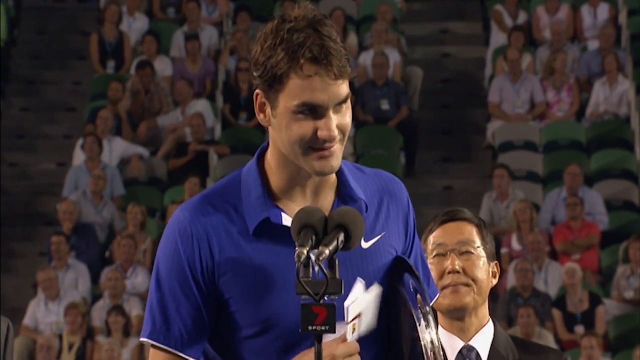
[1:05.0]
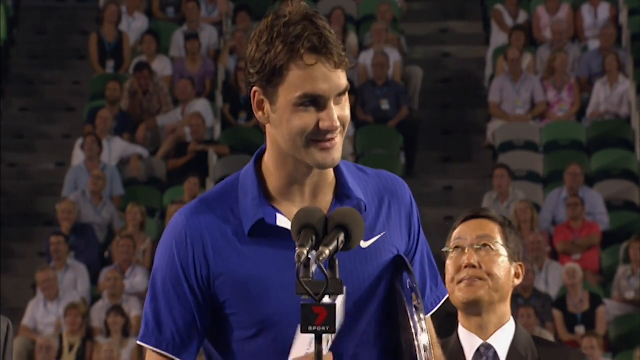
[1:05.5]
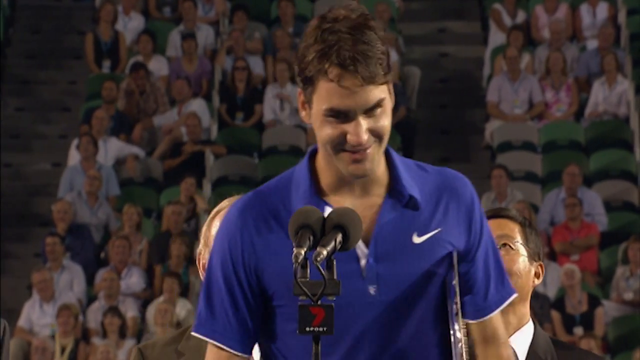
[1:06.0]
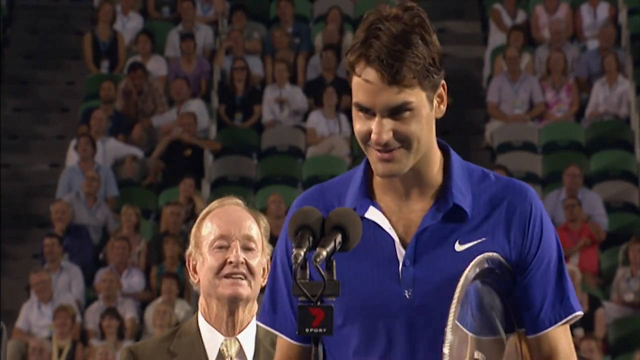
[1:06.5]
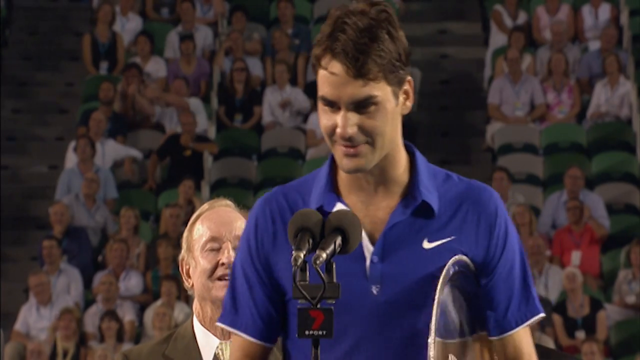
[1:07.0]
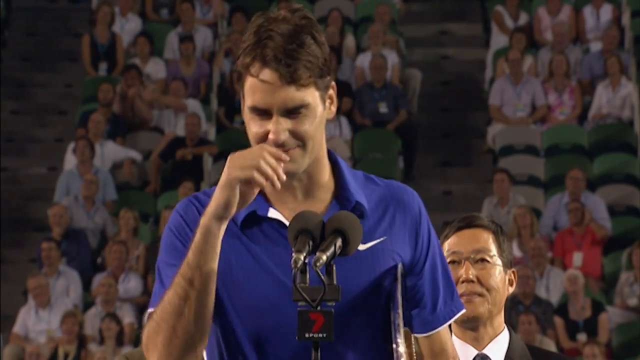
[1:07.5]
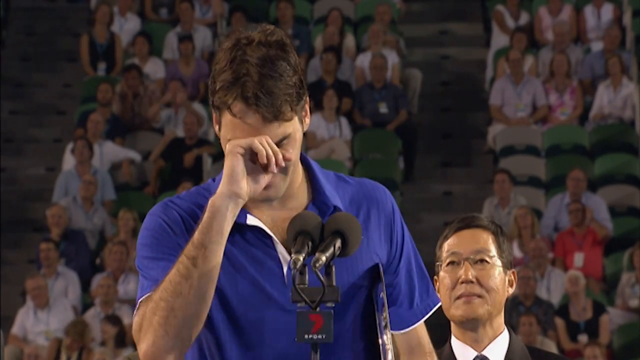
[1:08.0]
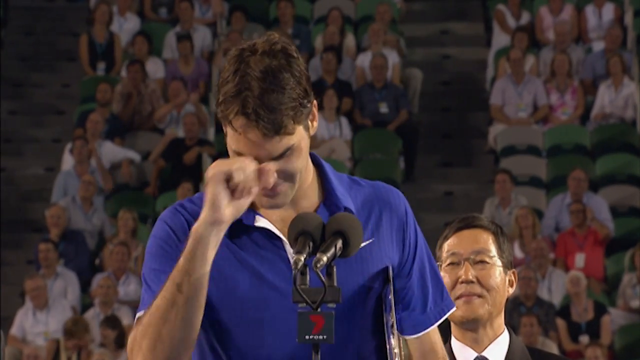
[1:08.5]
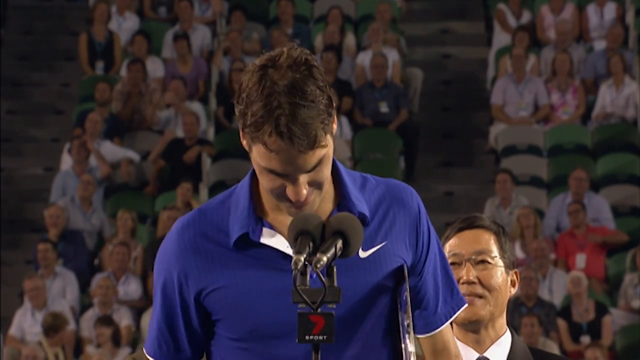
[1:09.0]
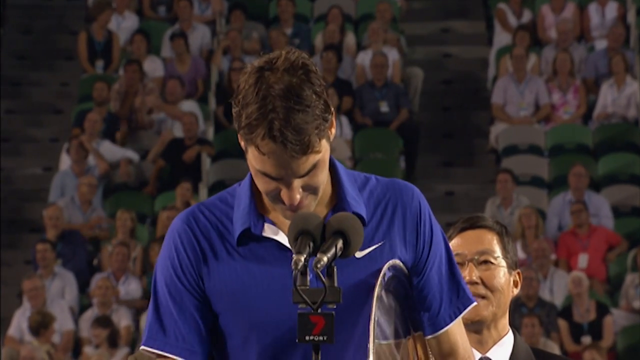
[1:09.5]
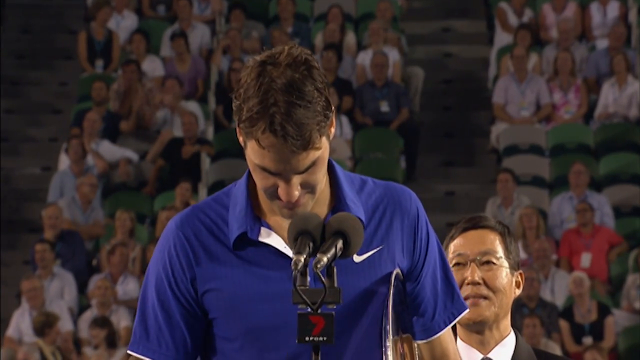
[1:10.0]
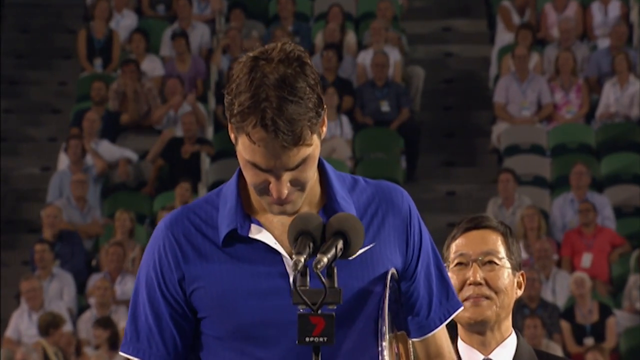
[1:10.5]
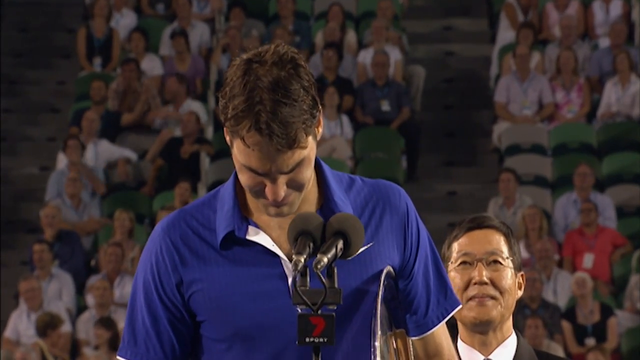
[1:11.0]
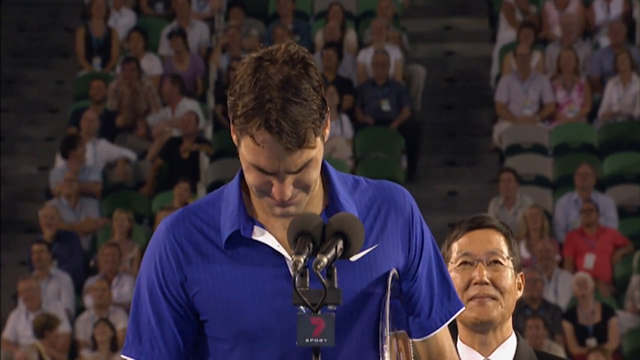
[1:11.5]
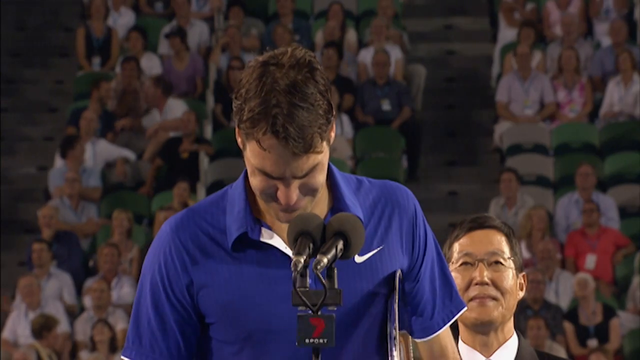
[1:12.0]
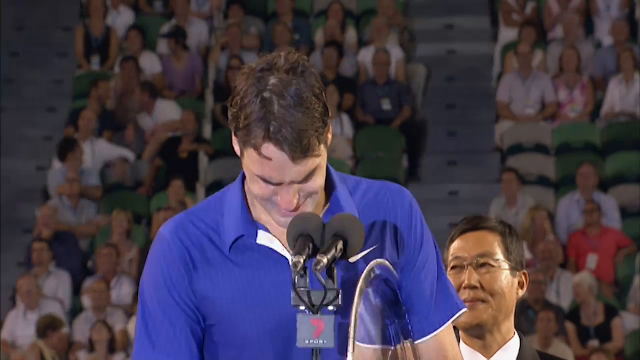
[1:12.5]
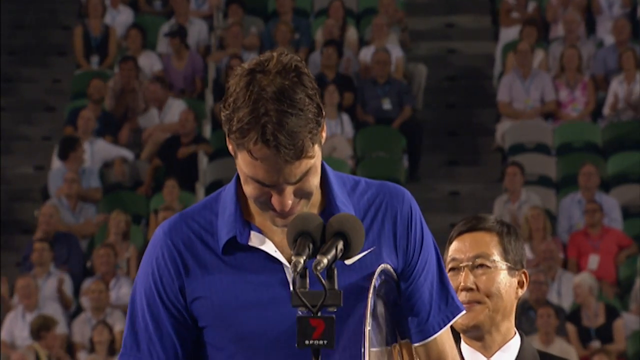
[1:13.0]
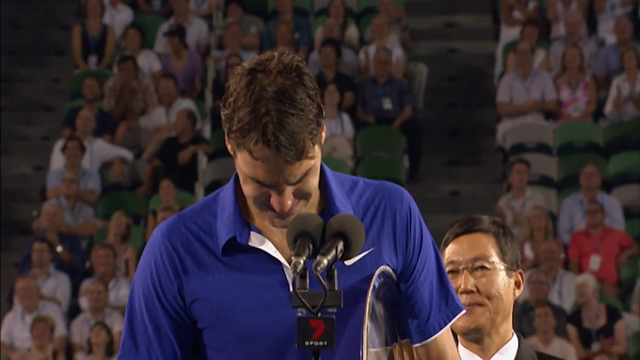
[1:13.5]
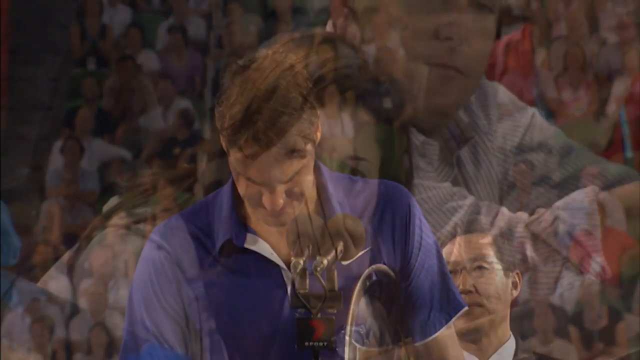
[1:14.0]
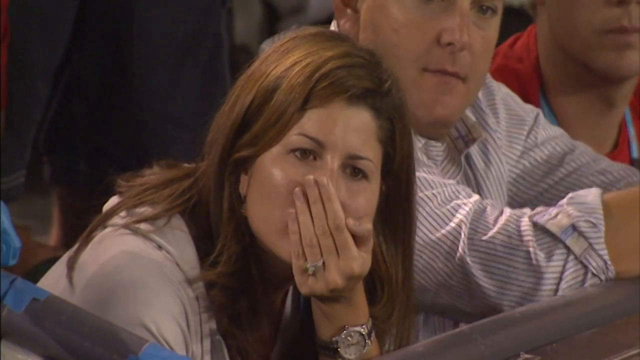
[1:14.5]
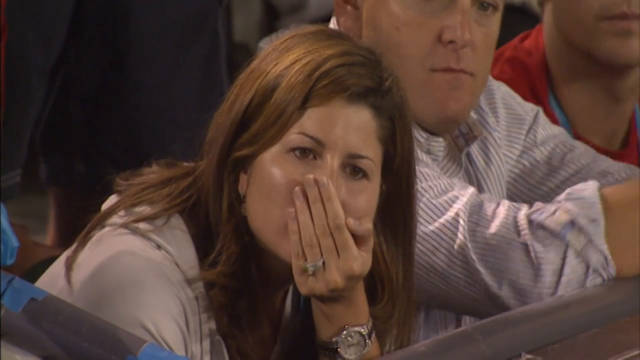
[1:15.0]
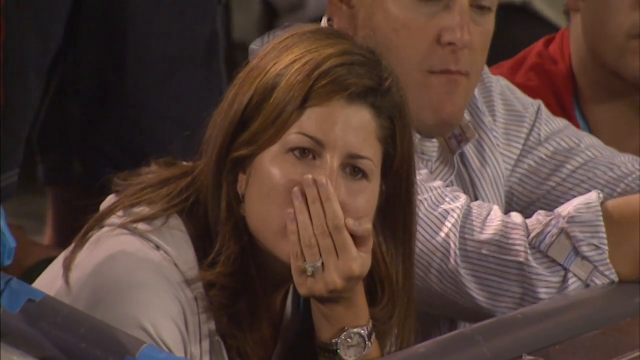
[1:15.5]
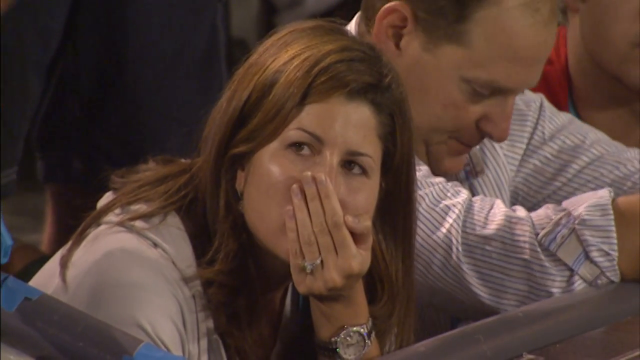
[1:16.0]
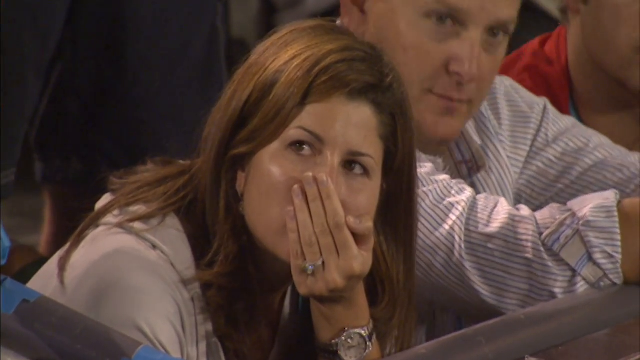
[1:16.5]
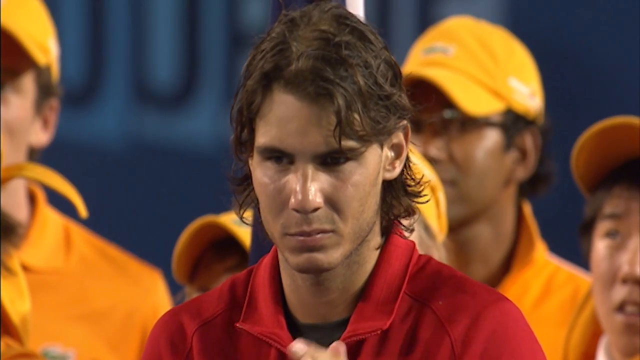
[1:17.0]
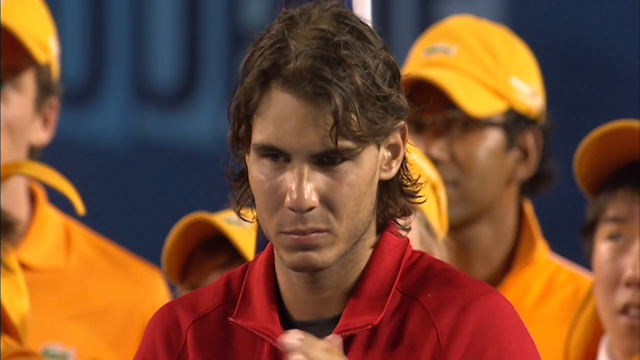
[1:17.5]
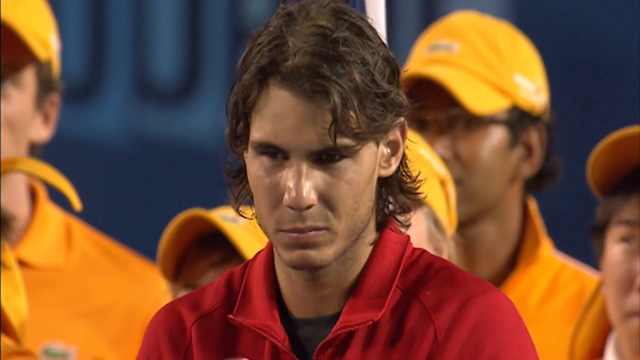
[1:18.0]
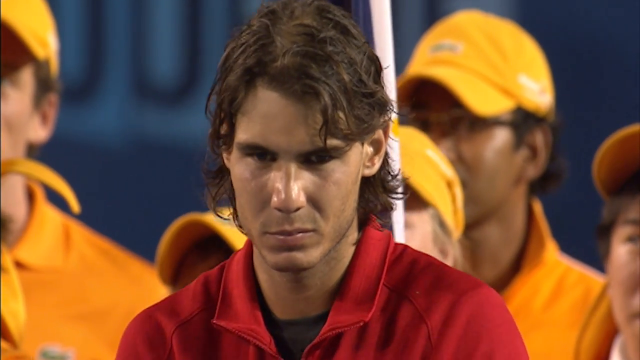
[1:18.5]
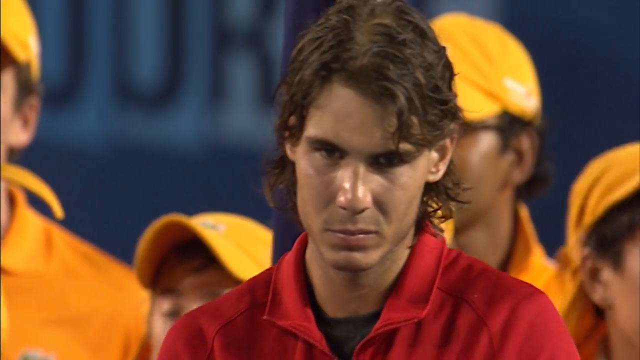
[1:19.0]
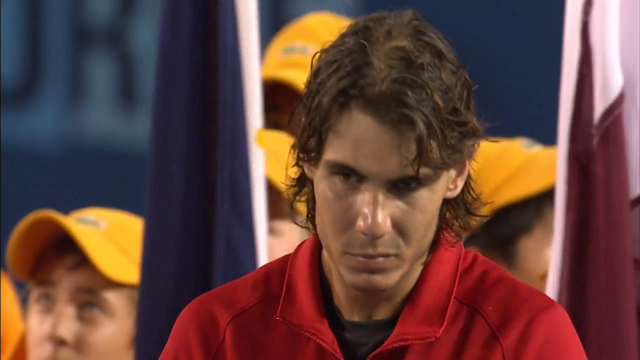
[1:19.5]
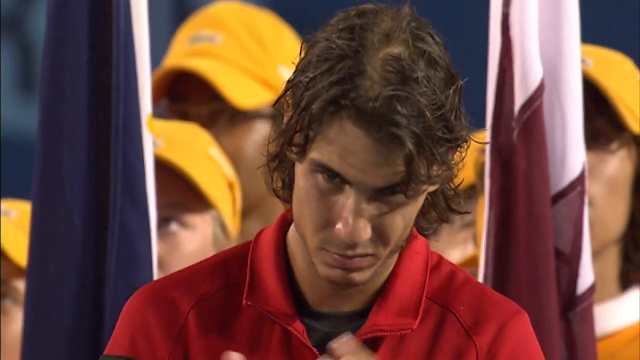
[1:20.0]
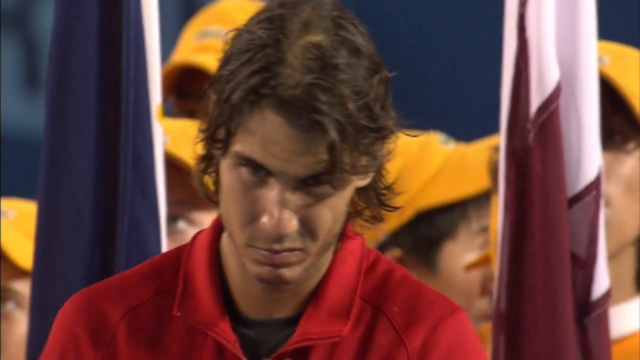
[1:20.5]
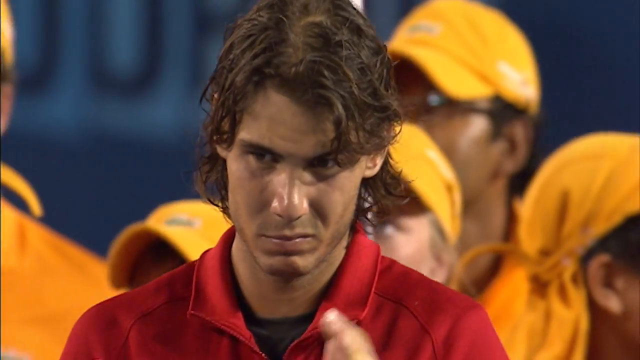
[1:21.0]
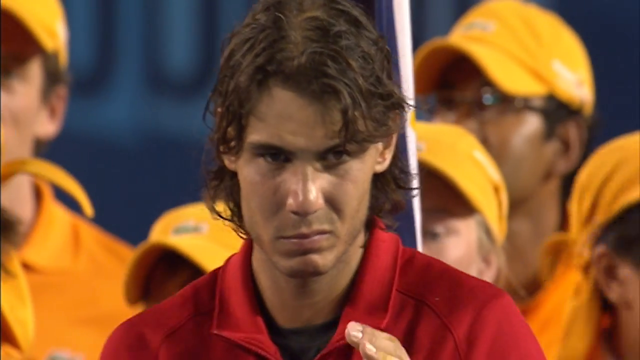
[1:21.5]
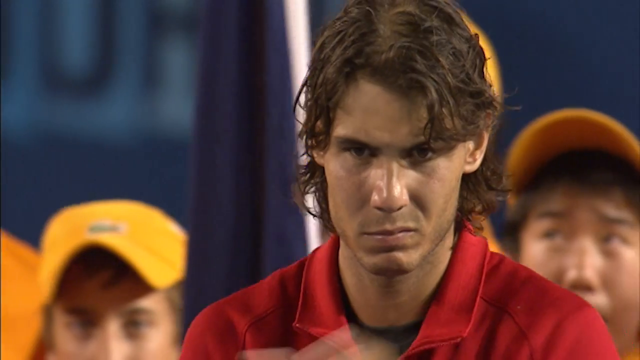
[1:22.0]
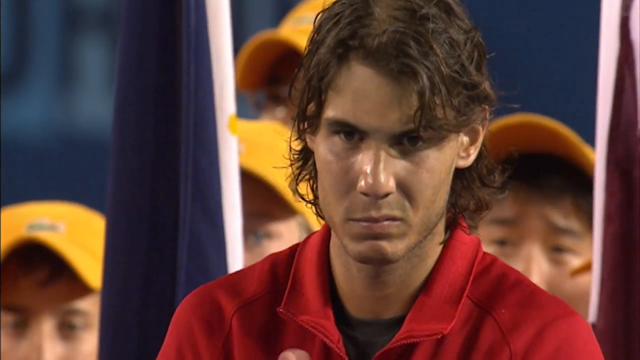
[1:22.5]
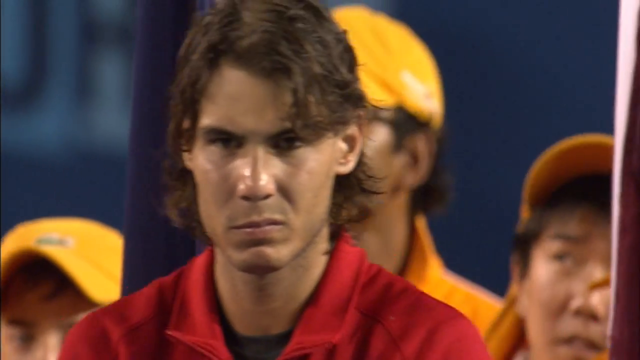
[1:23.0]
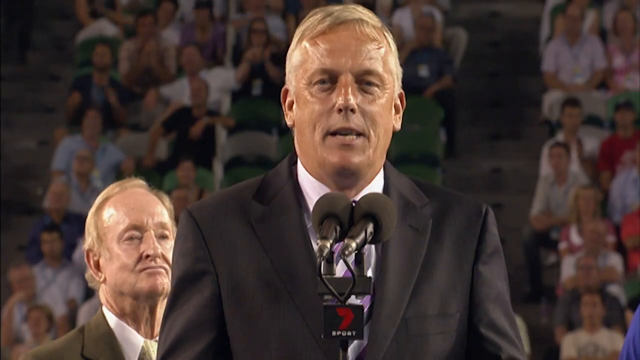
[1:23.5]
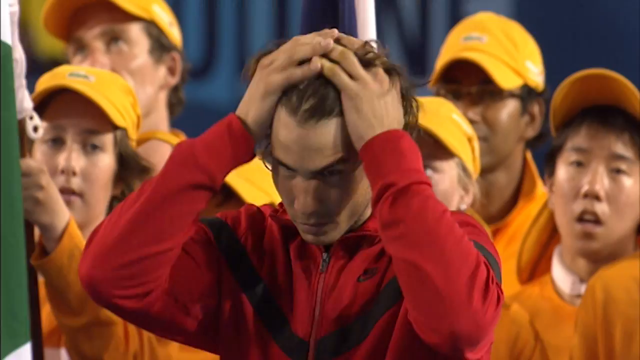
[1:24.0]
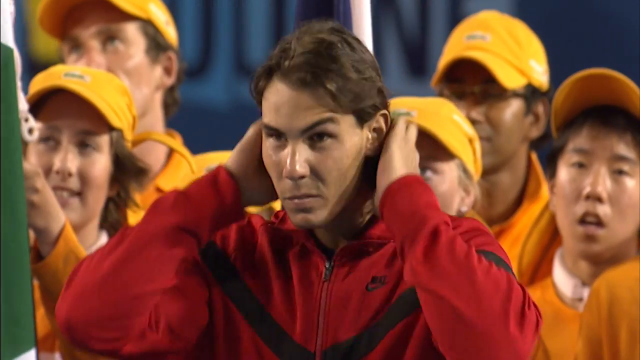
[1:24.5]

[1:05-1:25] Roger is still talking as cameras flash all over him, probably photographers taking pictures. A woman appears, looking unhappy. A man in a red jacket, Roger's opponent, claps without smiling and brushes his hair with his hands. Behind him are boys wearing orange t-shirts, yellow caps and orange caps. After Roger finishes, one of the managers, who wear black suits, talks. The cameras also flash at Roger's opponent.